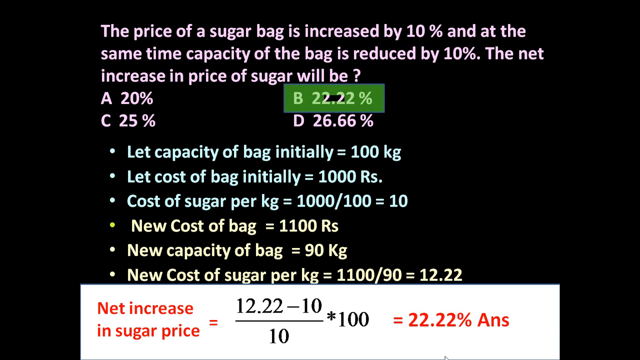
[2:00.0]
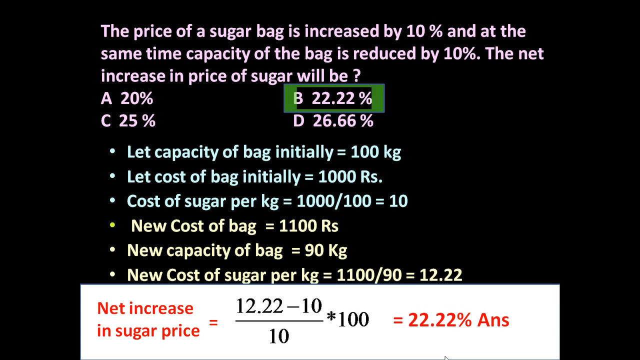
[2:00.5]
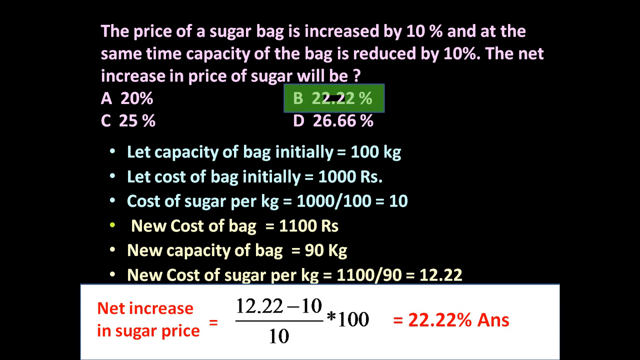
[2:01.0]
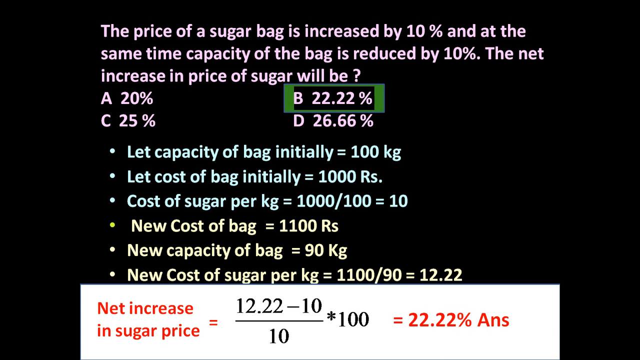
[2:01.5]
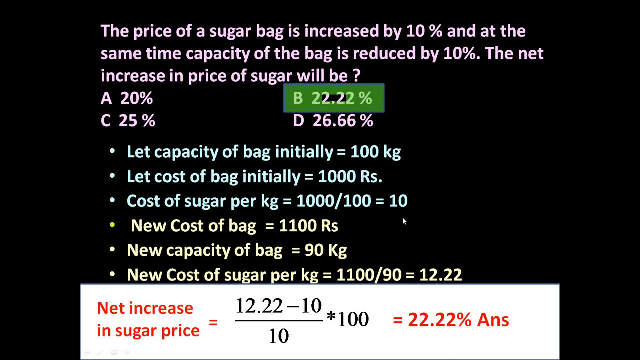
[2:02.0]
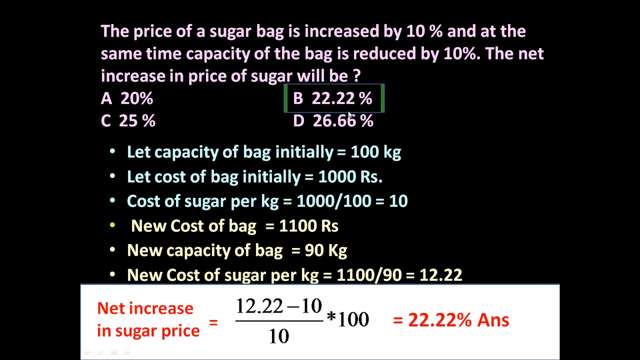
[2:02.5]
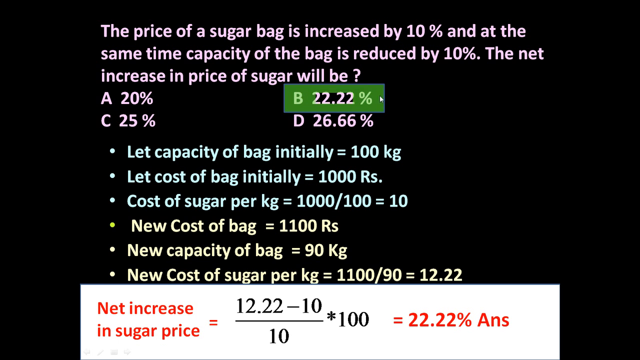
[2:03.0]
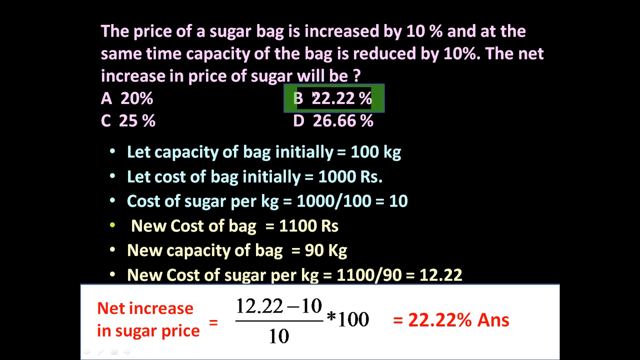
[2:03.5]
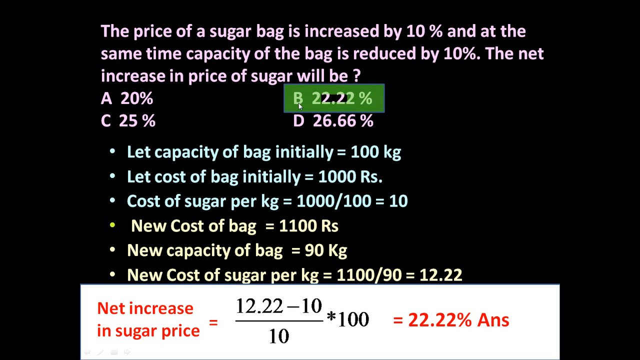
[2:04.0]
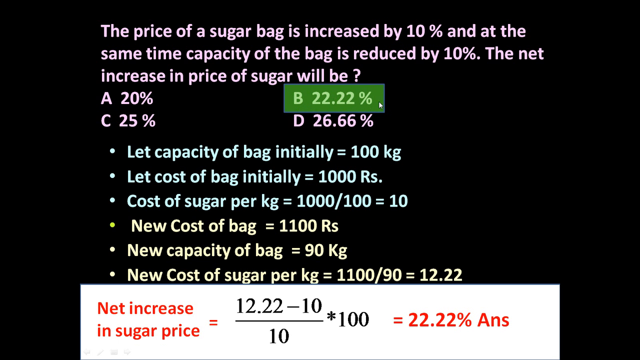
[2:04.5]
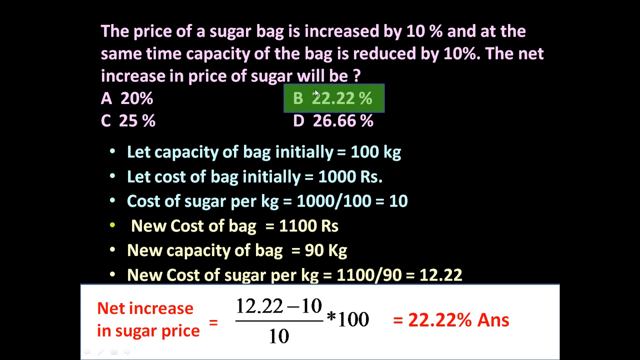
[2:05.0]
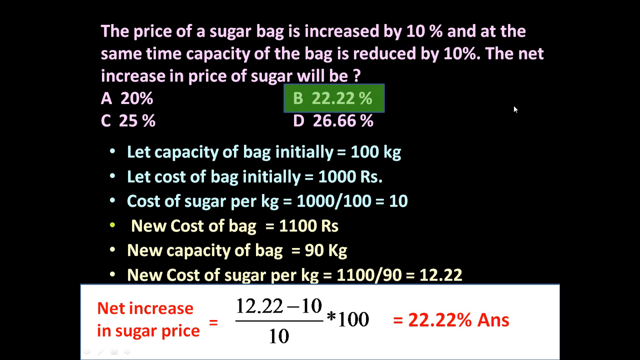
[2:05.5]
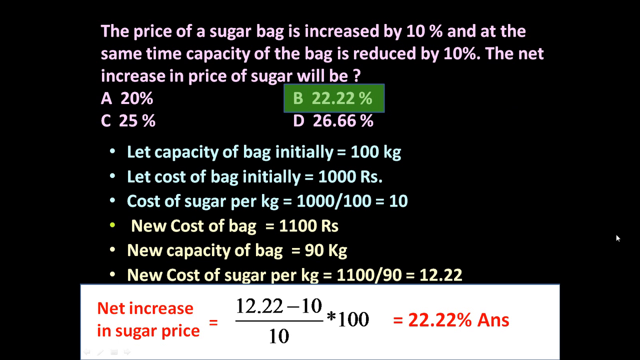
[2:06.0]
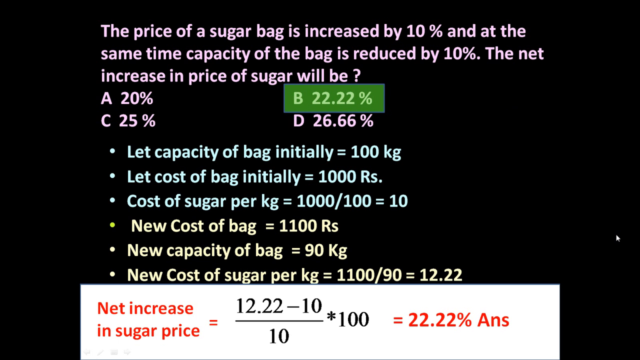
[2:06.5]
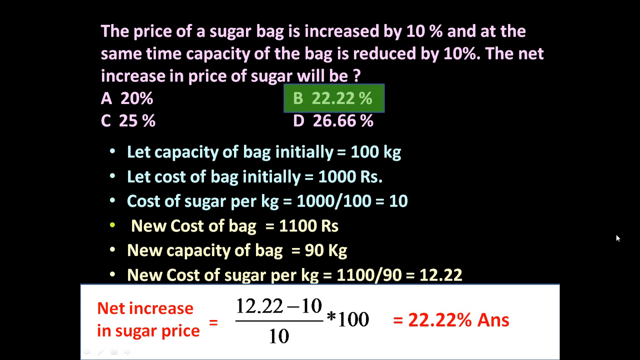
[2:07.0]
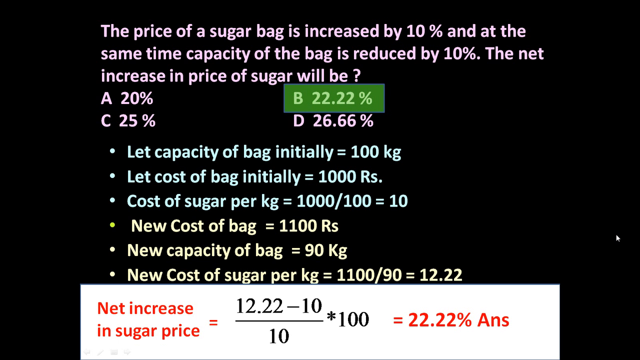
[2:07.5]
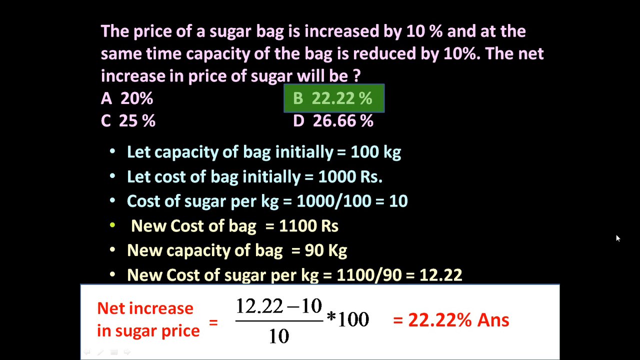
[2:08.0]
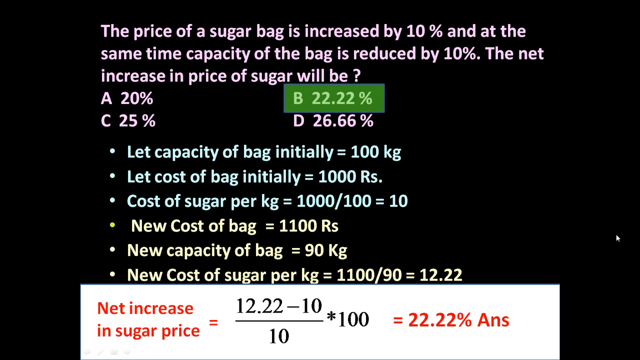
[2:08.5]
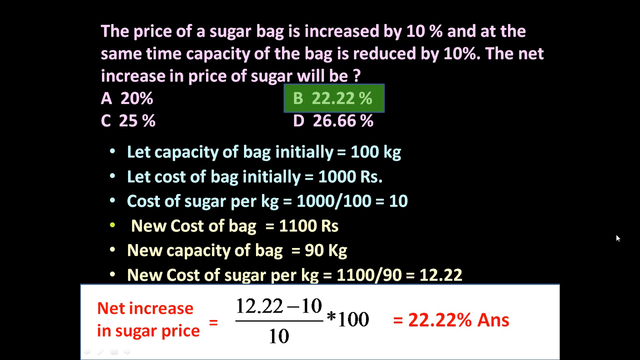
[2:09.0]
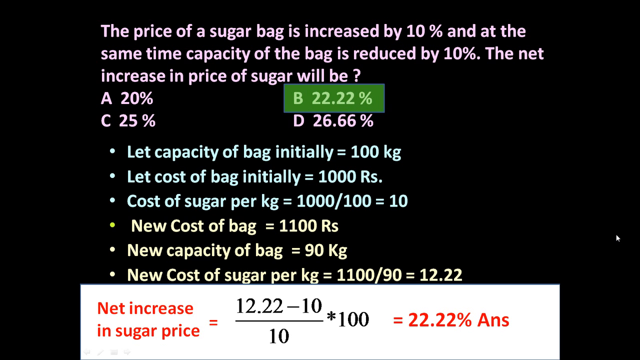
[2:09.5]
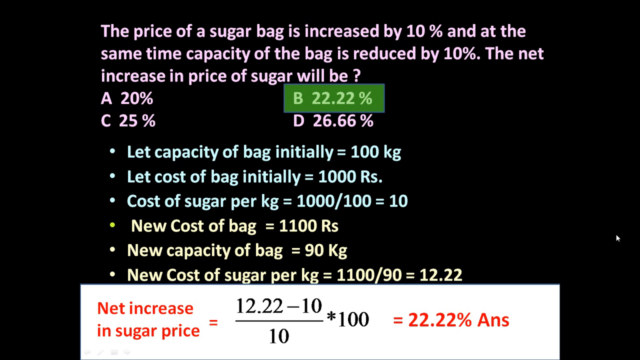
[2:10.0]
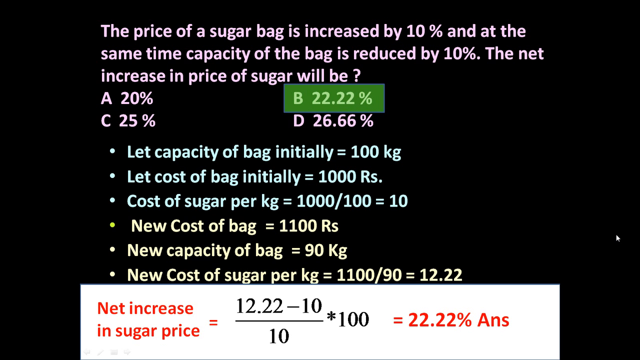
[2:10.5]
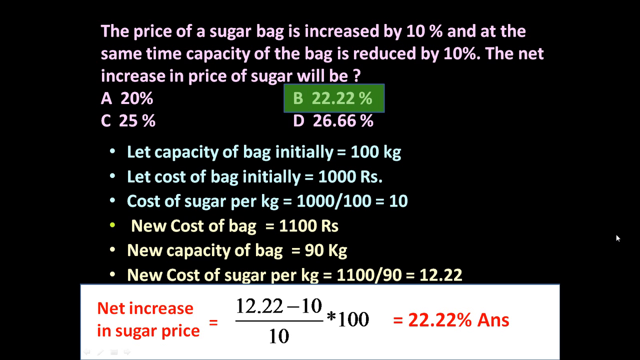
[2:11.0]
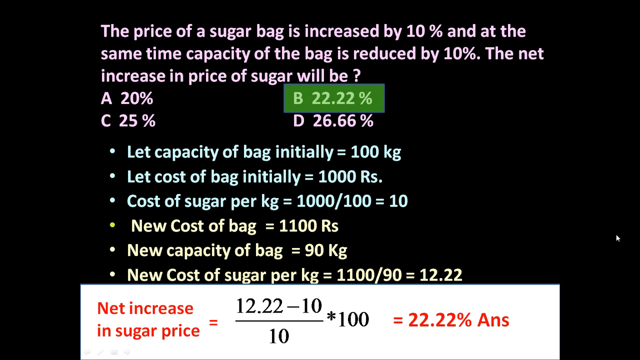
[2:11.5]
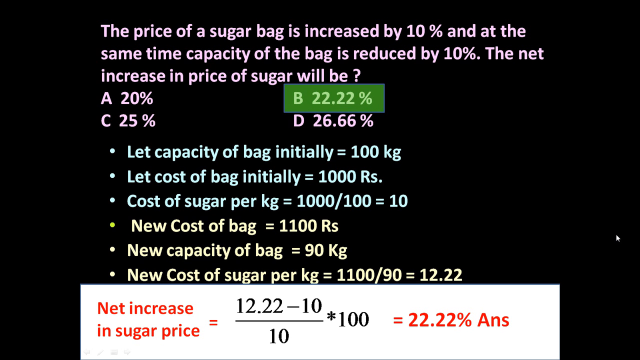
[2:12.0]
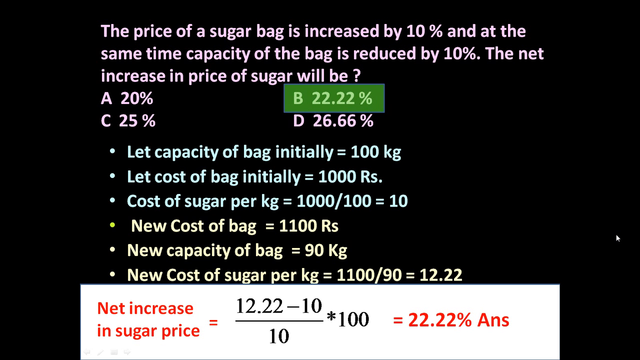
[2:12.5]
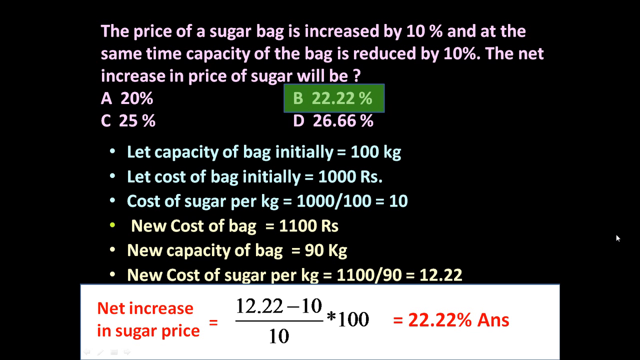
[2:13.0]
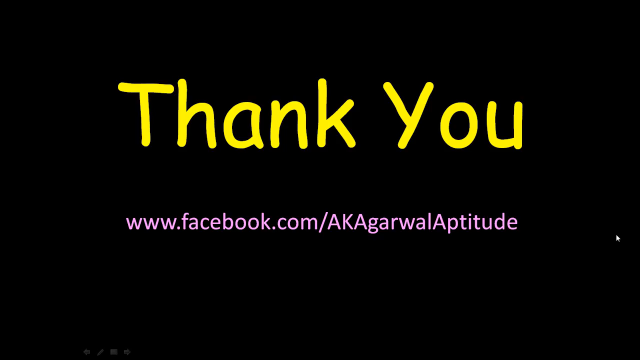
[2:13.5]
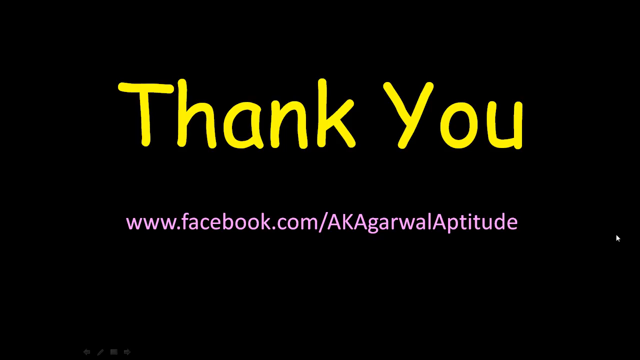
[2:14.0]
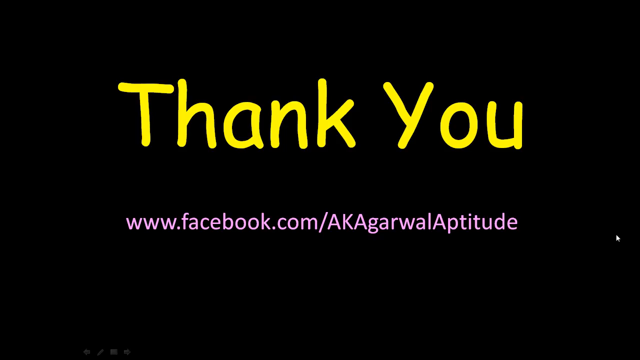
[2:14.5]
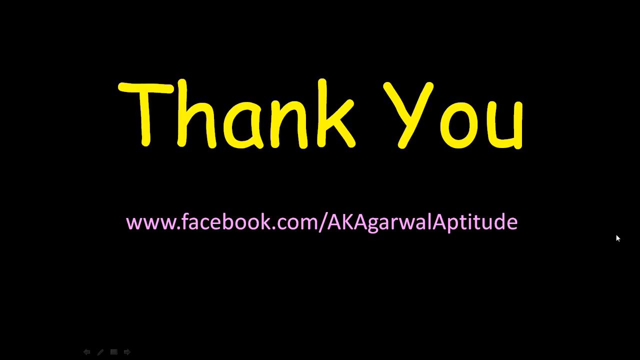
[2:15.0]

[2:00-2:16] At the top of the screen, a green rectangular highlight starts from the border around answer choice B, near the top center of the screen, and fades in, filling the background of the rectangular outline. The animation repeats in a loop, moving inward from the border until the box is completely filled with green and then starting over. At the bottom of the screen, a white rectangular box encloses the final answer step, where the net increase is calculated by dividing the change in cost of sugar by the original cost and multiplying by 100 to get the percentage change in cost of sugar per kilogram. The video ends with a black screen with "thank you" in very large orange font, and underneath it a Facebook link for AK Agarwal aptitude in purple font.